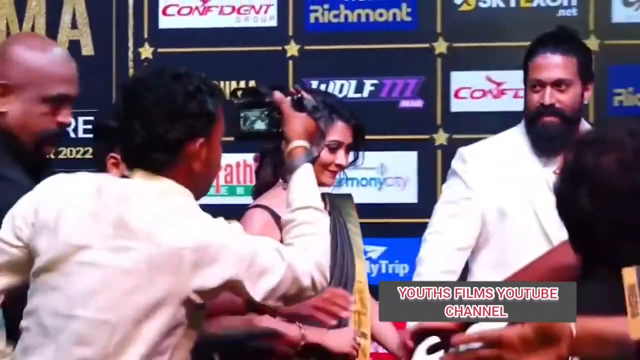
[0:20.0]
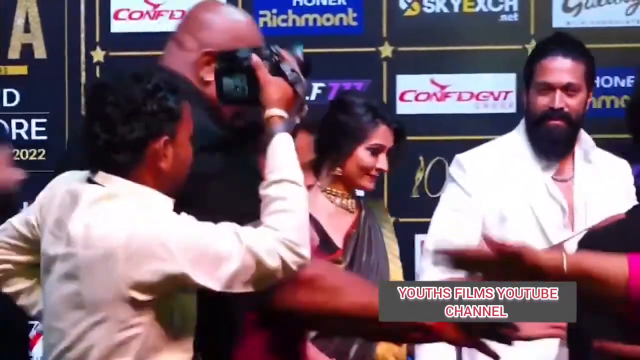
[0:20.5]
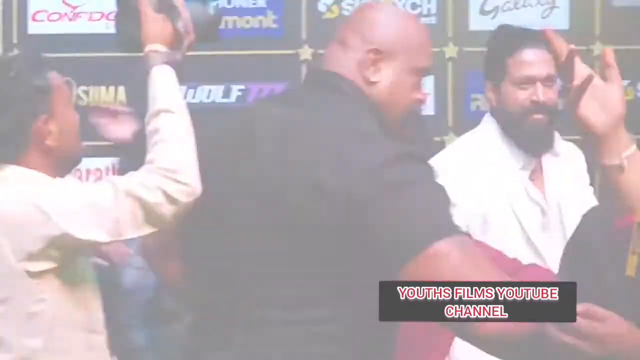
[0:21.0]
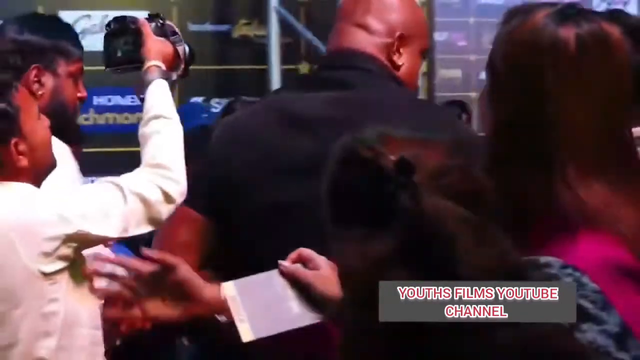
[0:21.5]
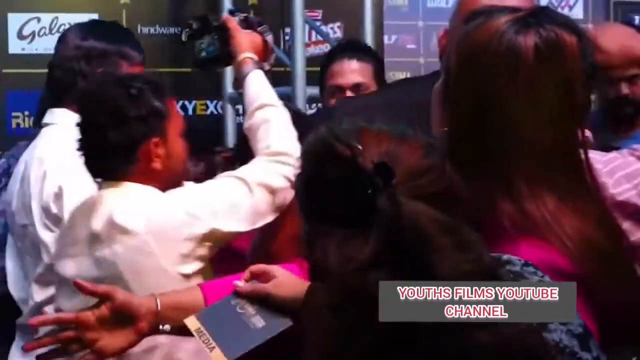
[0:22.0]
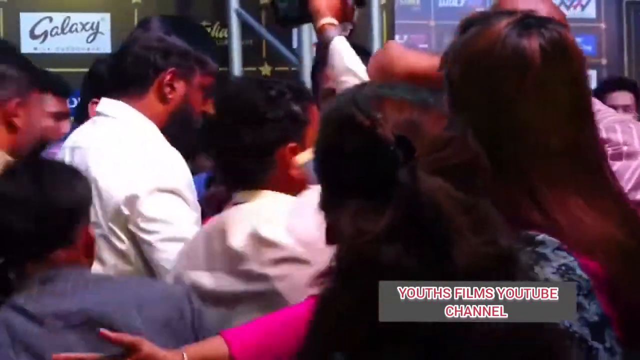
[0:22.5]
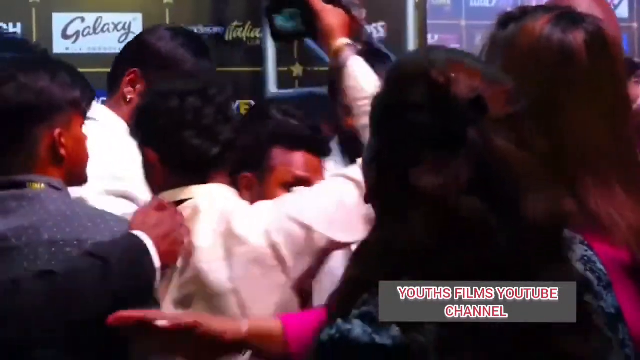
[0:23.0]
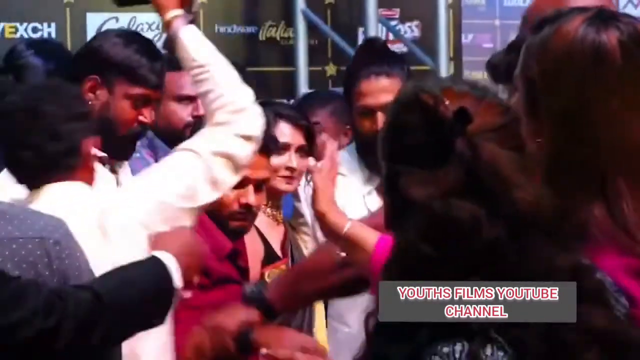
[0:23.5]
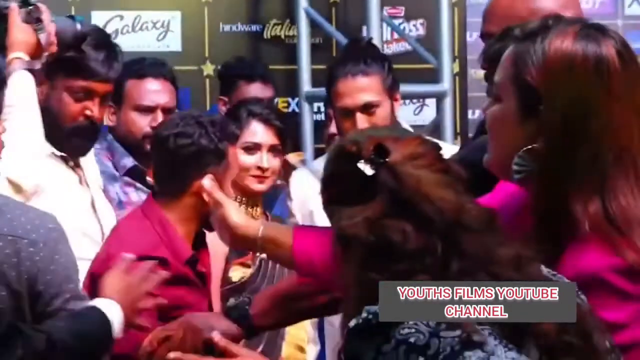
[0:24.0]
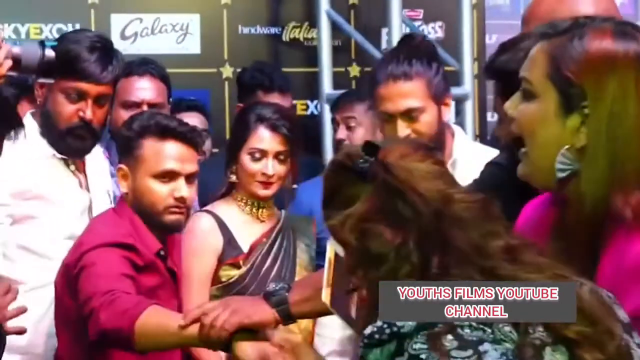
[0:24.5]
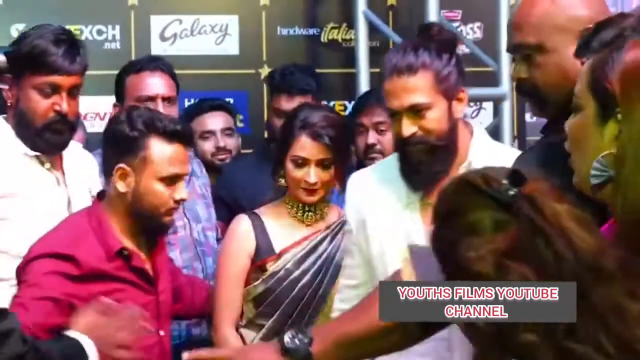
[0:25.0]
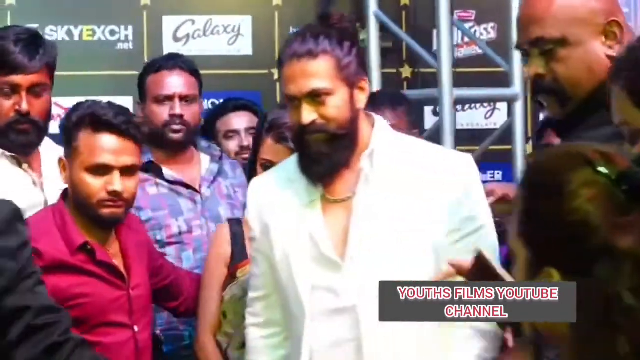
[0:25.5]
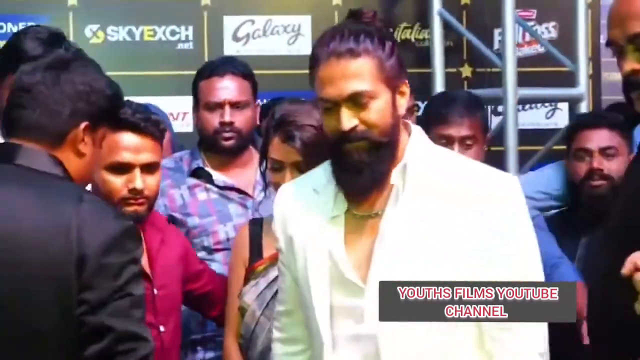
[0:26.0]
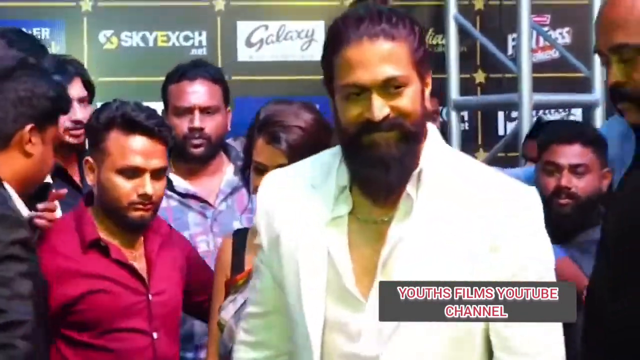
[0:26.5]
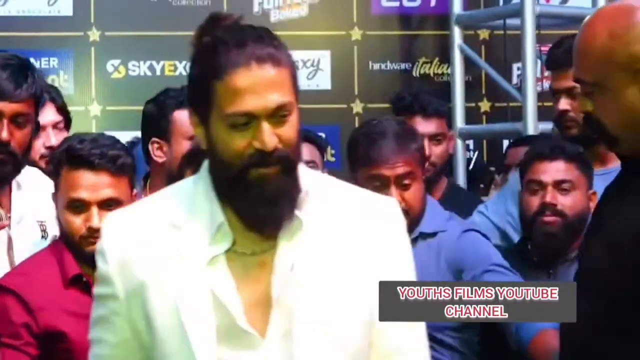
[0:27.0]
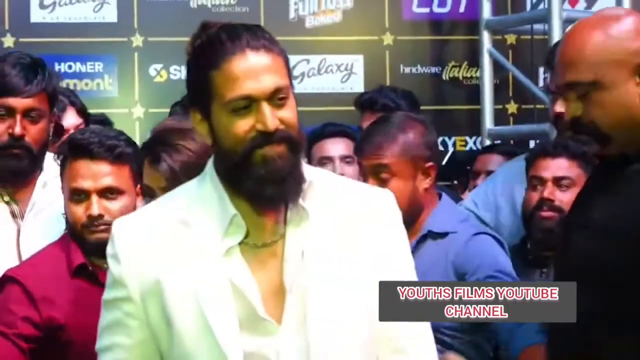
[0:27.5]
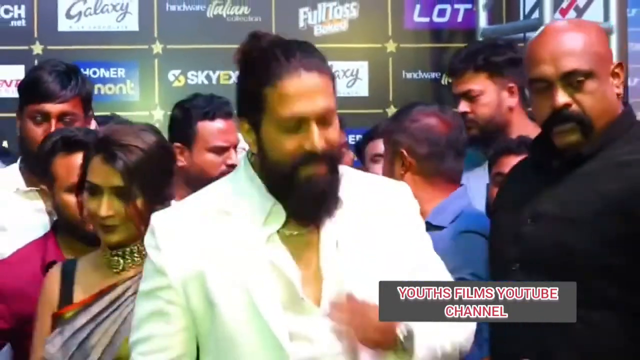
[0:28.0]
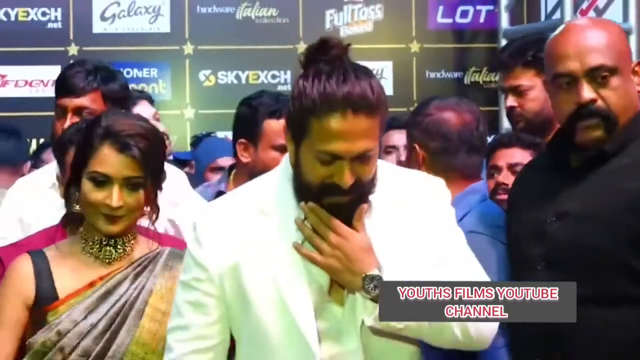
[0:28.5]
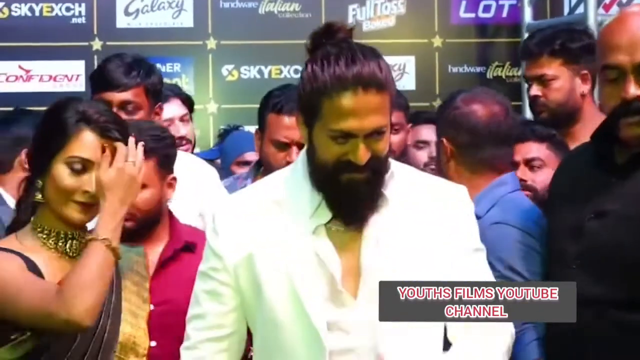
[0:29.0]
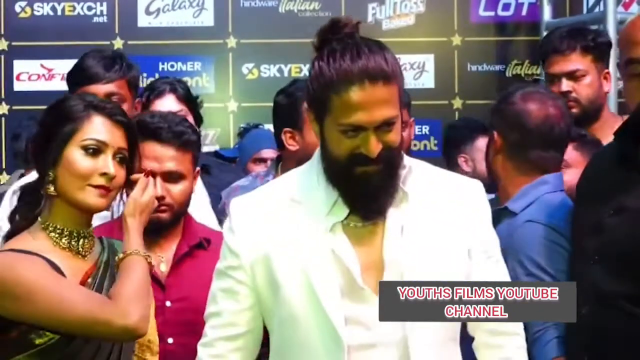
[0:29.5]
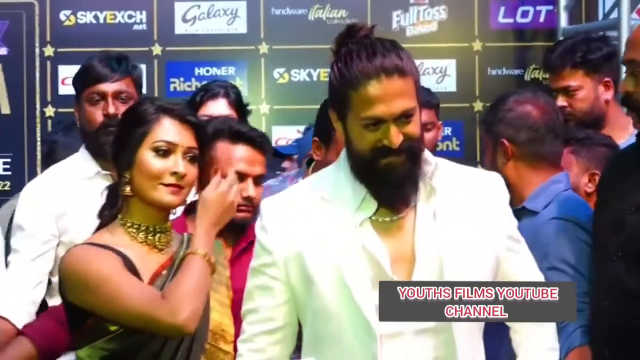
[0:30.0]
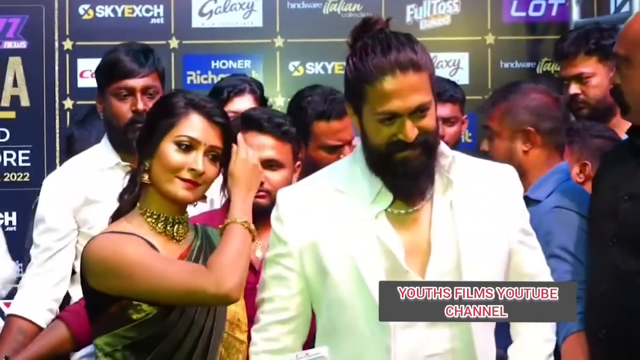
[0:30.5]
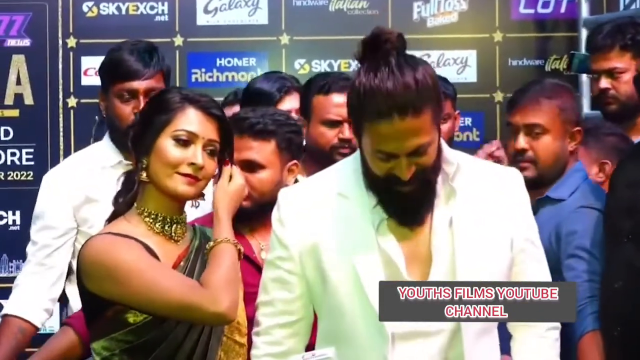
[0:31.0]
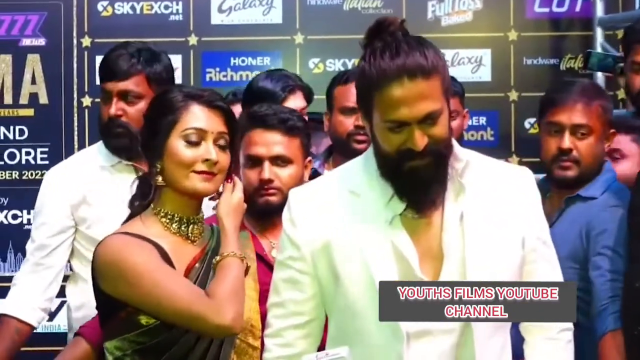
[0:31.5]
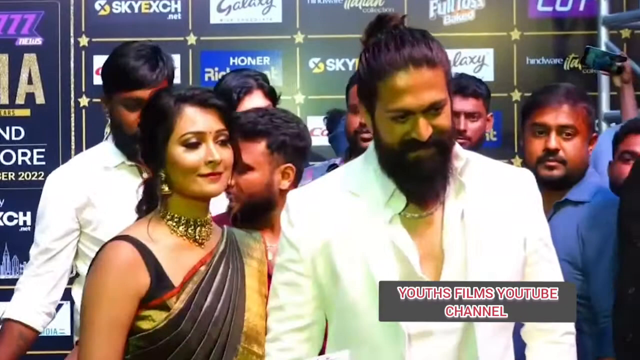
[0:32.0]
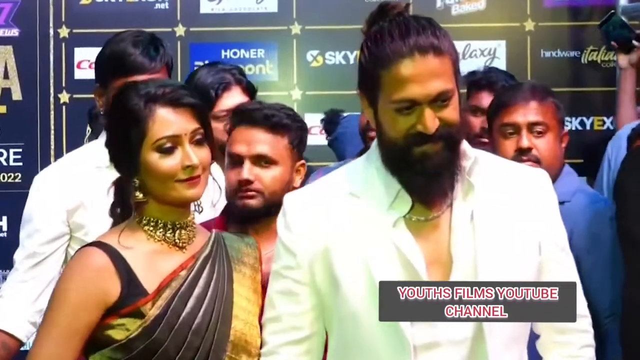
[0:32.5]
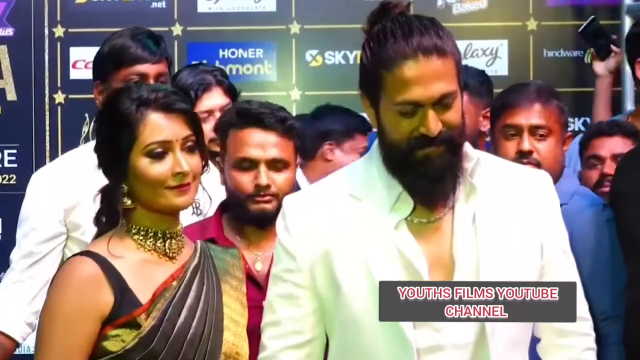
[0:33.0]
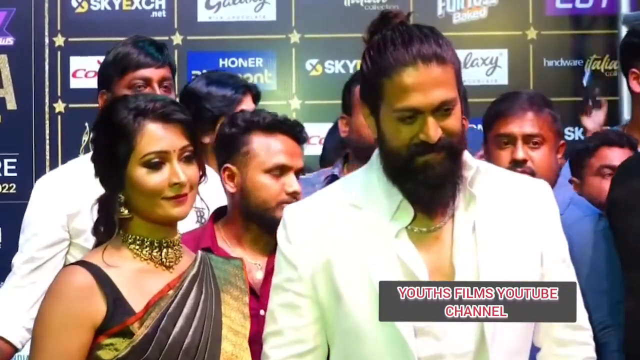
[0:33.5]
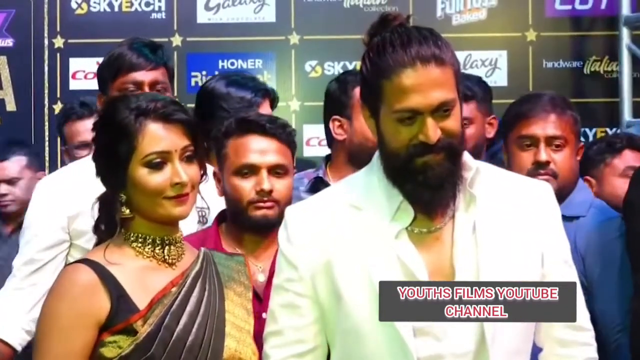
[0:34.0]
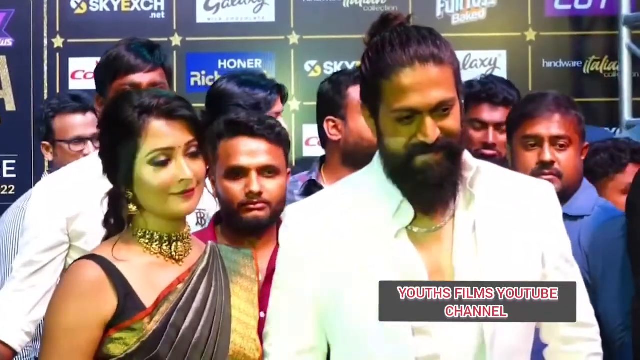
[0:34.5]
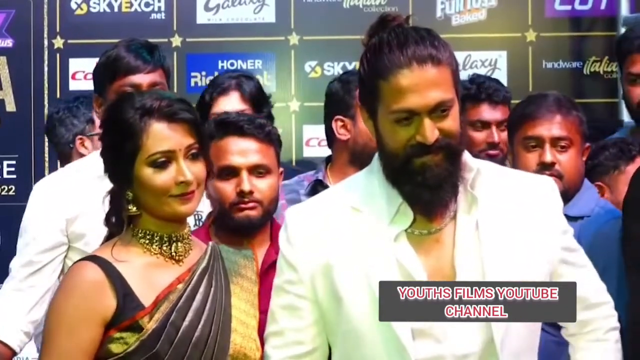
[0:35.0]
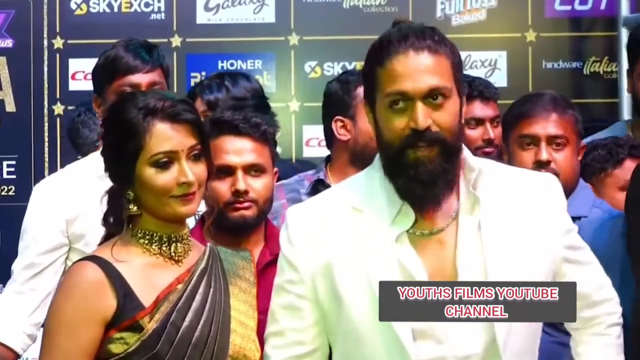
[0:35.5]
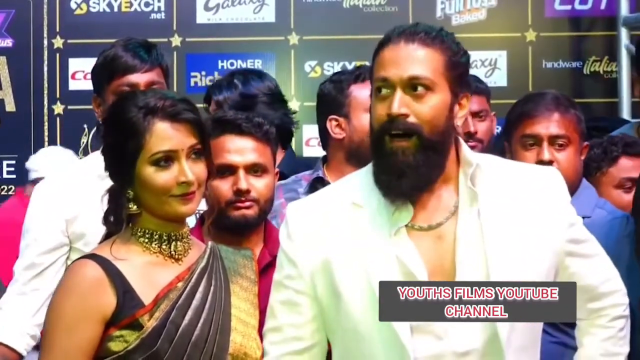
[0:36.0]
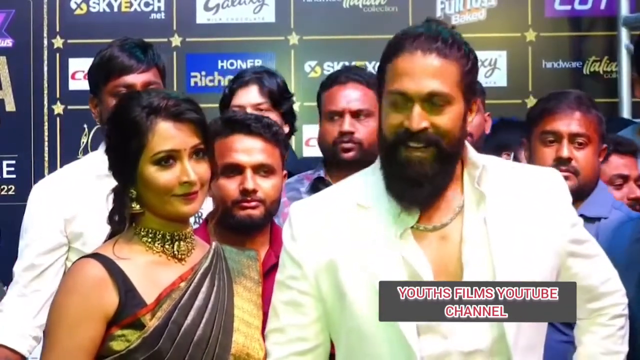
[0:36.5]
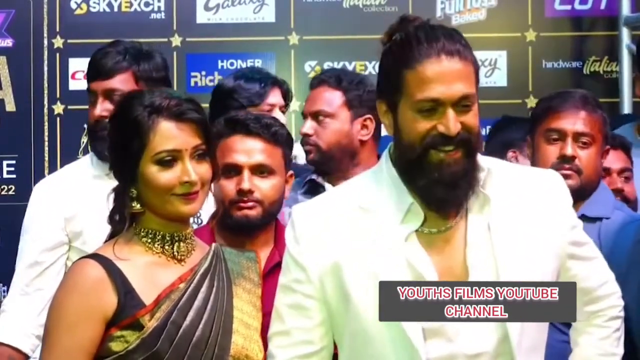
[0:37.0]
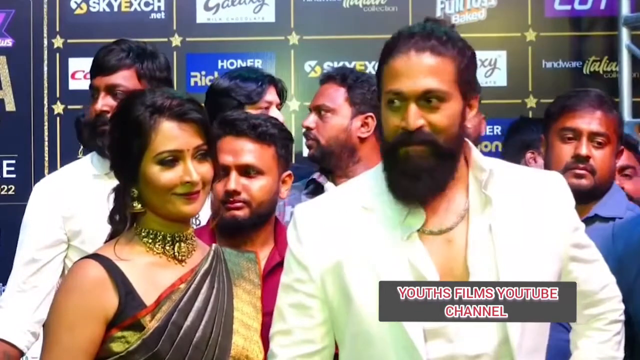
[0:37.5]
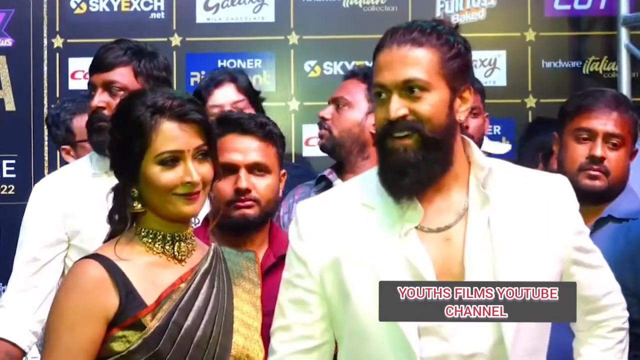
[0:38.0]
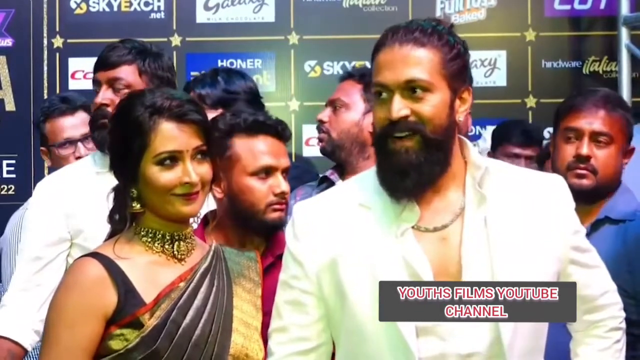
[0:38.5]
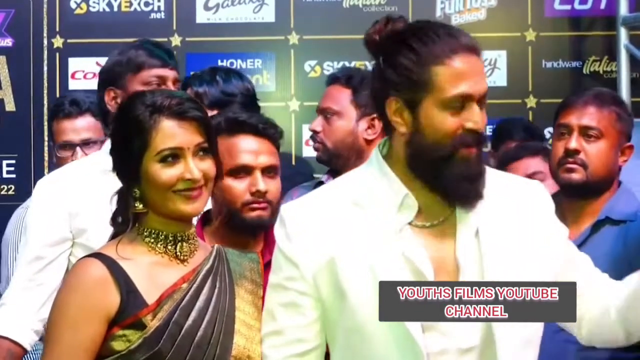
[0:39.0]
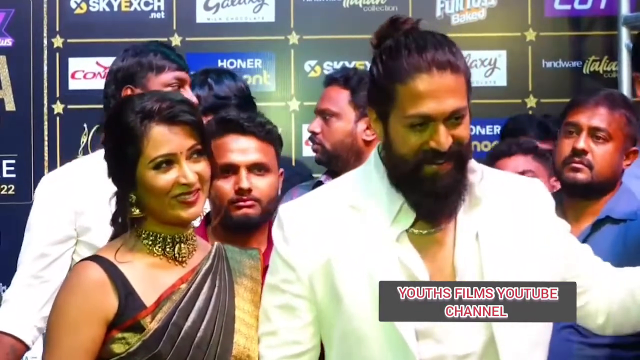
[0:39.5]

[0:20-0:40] The couple finishes posing for photos in front of the press and is swarmed by paparazzi-style photographers as many flashbulbs go off. The man, on the right, wears a white suit with a white shirt unbuttoned down to the mid chest. He has a full beard and mustache, and presumably long hair tied up on top of his head in a knot. At one point he gestures, smooths his beard and smiles at someone who is asking him a question. To his left is a young woman in a gold and brown sari. Her dark hair is swept over one side of her face with some tendrils hanging down by her ears, and it looks like it is in a low ponytail. She wears large gold statement jewelry on her neck and gold earrings. Both smile, talk and nod along as the paparazzi or photographers ask questions. Red text at the bottom of the screen reads "youths films YouTube channel".